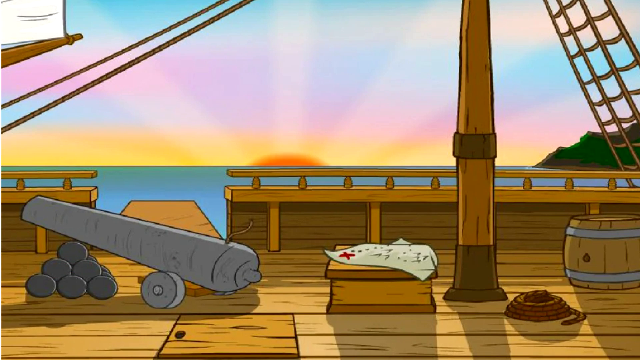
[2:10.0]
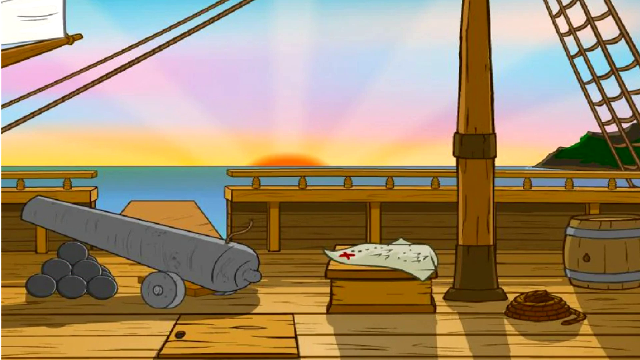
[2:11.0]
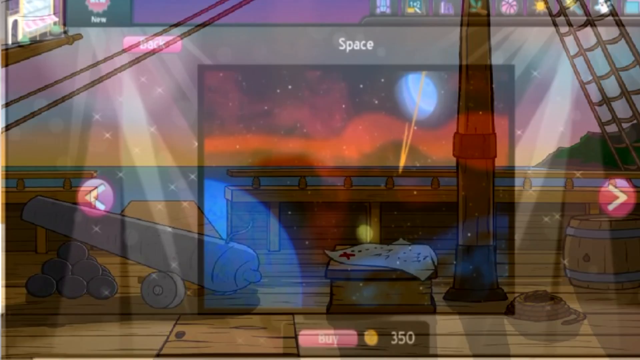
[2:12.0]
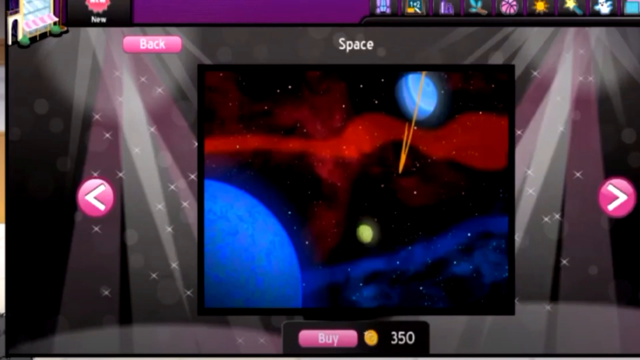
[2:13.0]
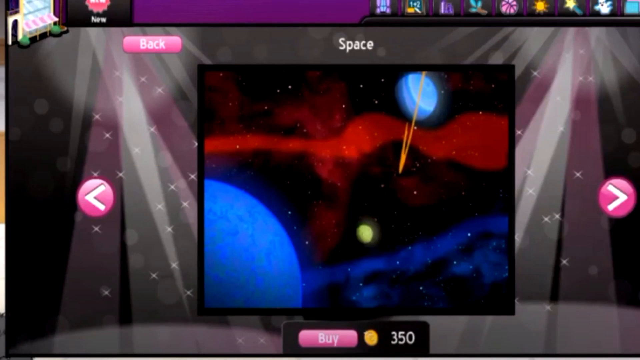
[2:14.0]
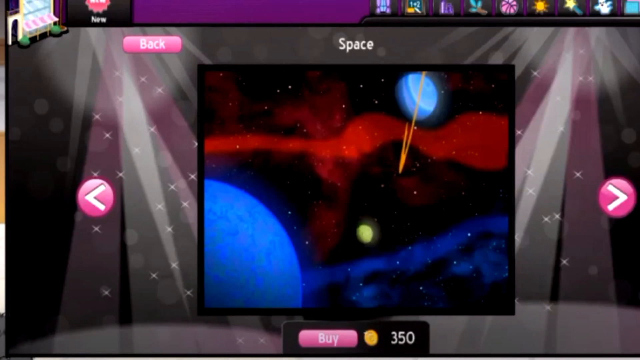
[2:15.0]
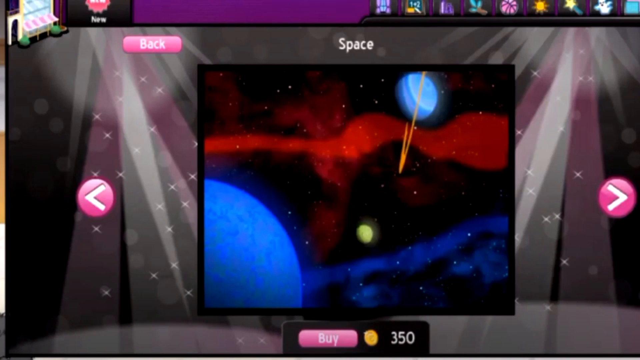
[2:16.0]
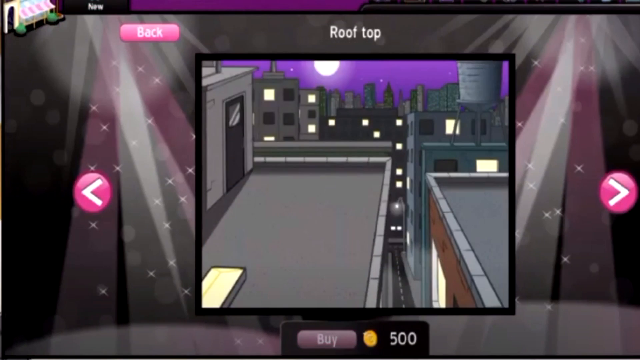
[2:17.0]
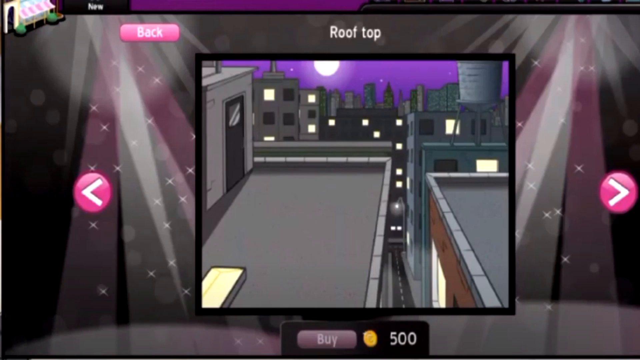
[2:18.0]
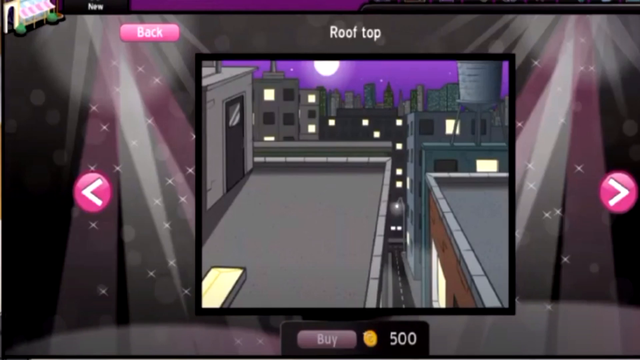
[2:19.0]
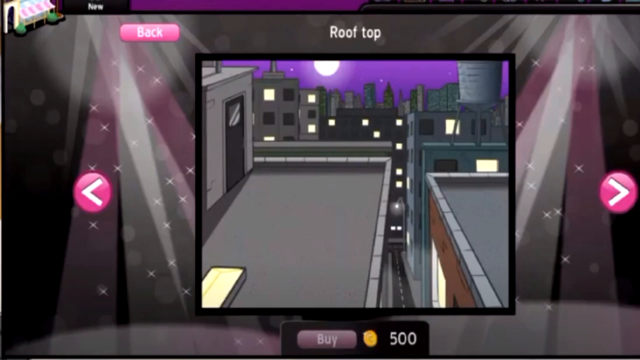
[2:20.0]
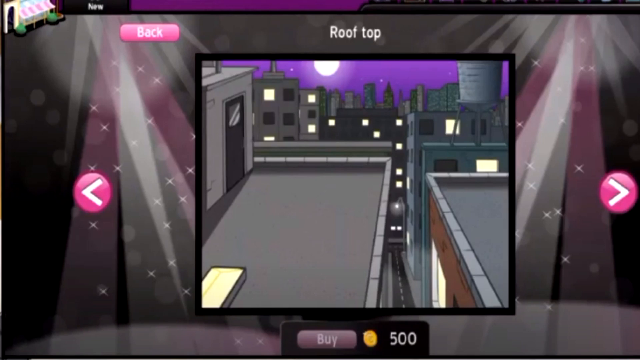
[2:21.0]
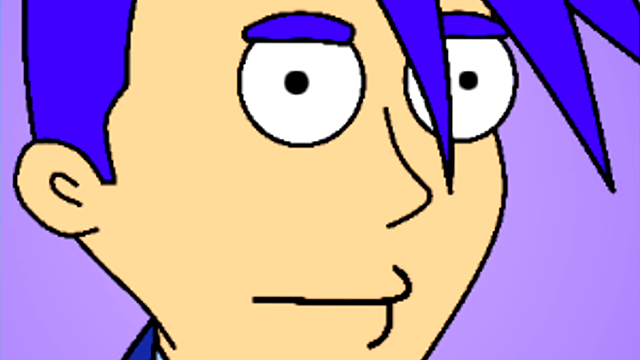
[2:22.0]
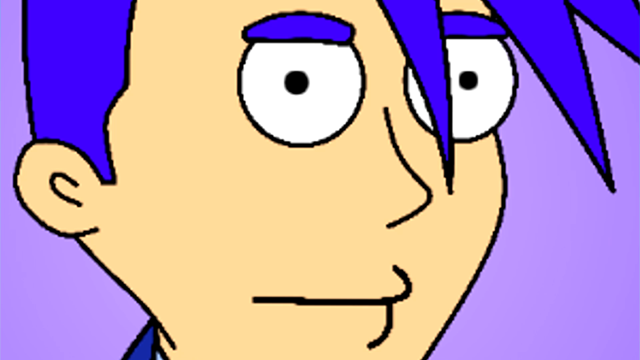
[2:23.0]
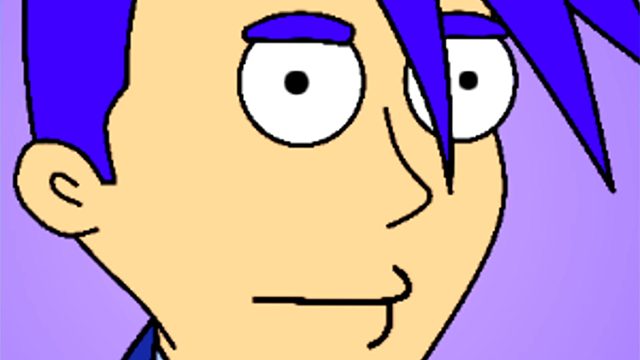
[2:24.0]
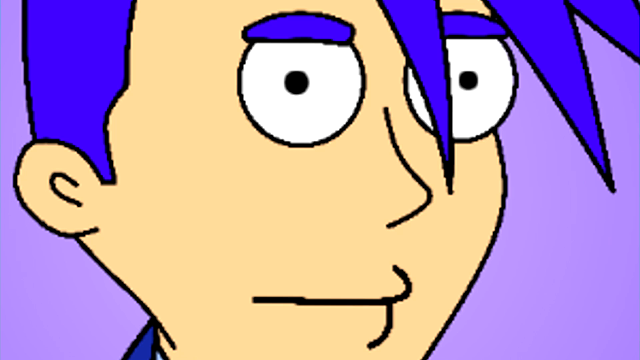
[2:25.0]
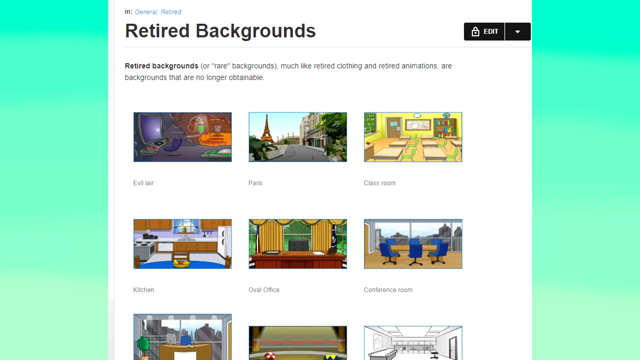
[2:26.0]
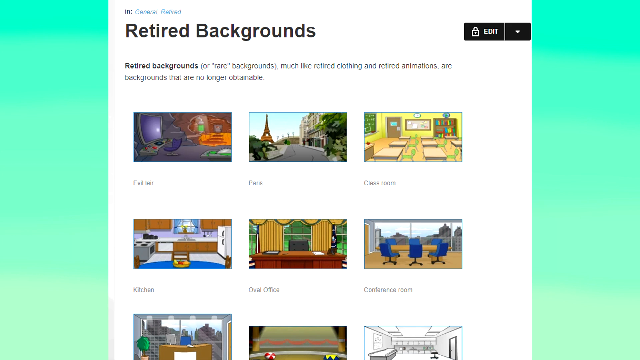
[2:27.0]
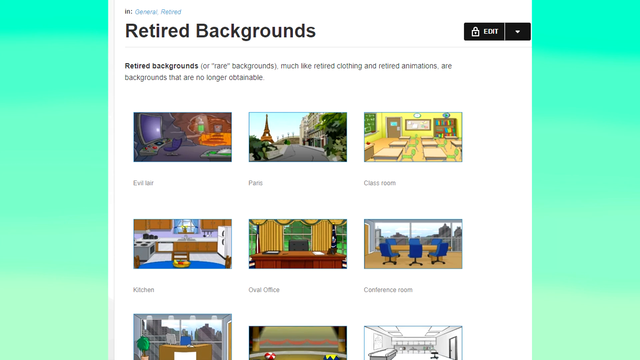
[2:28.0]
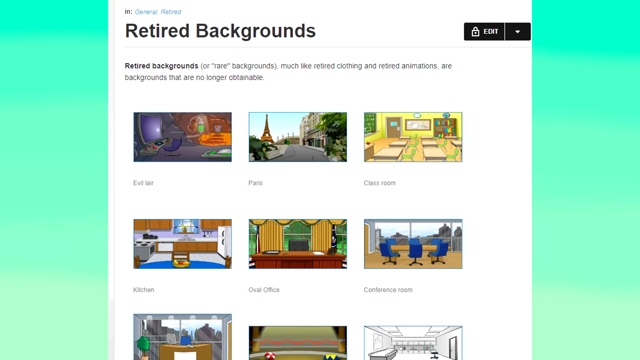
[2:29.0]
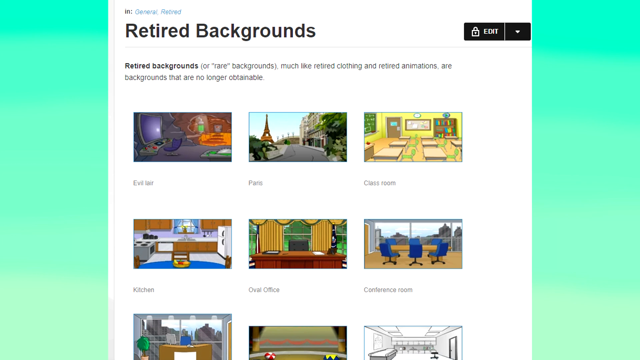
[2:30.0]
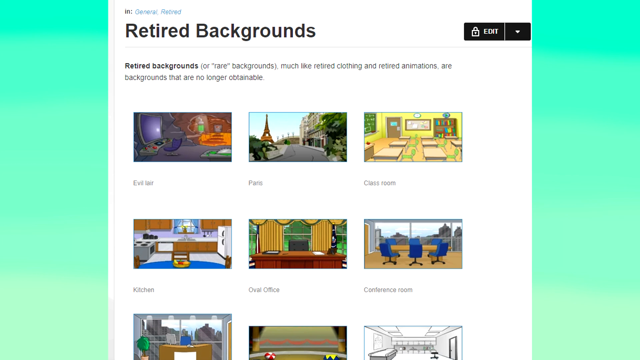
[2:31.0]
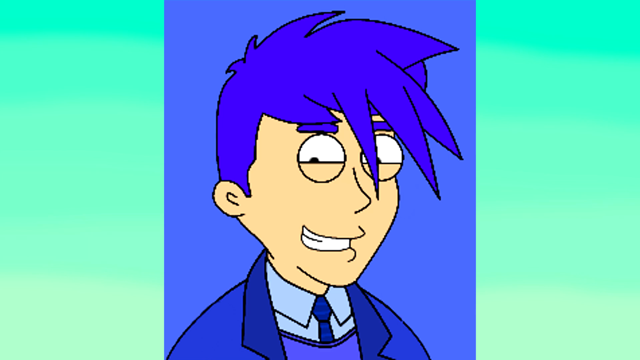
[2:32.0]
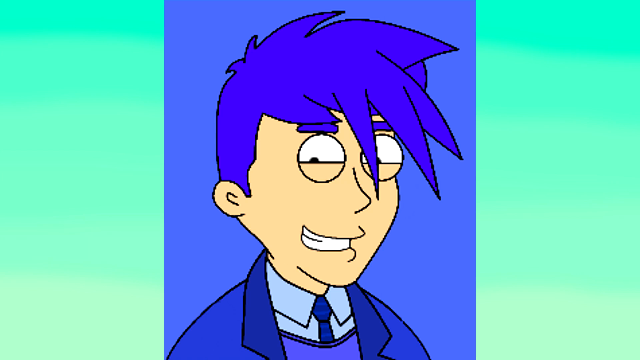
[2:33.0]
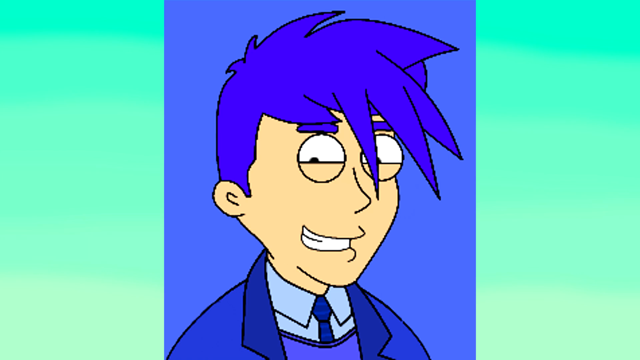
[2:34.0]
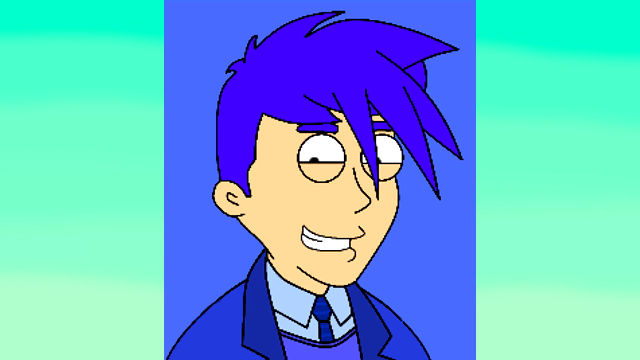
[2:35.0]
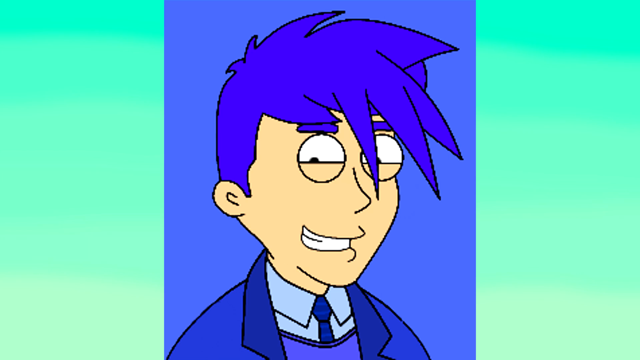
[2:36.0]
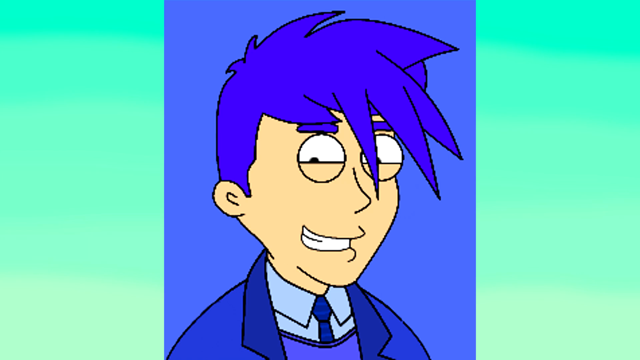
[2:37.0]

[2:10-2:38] On the pirate ship background, the sun is setting in a sky of blue, purple and yellow strips, with white beams coming out of the sun. On the ship there is a net on the right-hand side, a big mast and a barrel. In the middle is a box with a treasure map marked with a red X. A cannon is balanced on a triangular heap of cannonballs that looks six high, and a plank is just behind the cannon, walk-the-plank style; they are made of wood. A sail is visible in the top left-hand corner. Next is a space background that looks like an animated computer screen, with many icons along the top and more on the left. In the middle is a space picture: what seems to be the edge of a planet, a smaller yellow planet towards the bottom, and a slightly bigger planet above that with an orange ring, against a black sky with reds and blues. The word "space" is written at the top in white, and at the top left is a pink button that says "back" in pink. On either side of the picture is an arrow, one pointing left and one pointing right, white arrows in pink circles, suggesting you could scroll through pictures. Another background is set out in exactly the same way, with the back button and arrows, but this one says "rooftop". It shows two American-style building rooftops, like those people jump across in movies, with a door on the left leading out onto the terrace; nobody is there. The video then cuts to a background showing apparently a cartoon character with two big white eyes, peachy yellow skin, a line for the nose, a line for the mouth, and bright blue, big spiky hair and blue eyebrows, against a purple background. The video goes back to the retired backgrounds page seen before, which says "retired background or rare backgrounds much like retired clothing and retired animations are backgrounds that are no longer obtainable"; of the backgrounds listed, the evil lair has been shown, but not Paris or the conference room, while other backgrounds have been shown. It then cuts to the blue-haired face again. This time the bottom half of the eyes is the same colour as the skin and the top half is white. All of the same blue hair is now visible: short and a bit spiky, with spikes coming down over the eyes. The character wears a blue suit, a blue tie and a kind of gray shirt, and is smiling, but it is almost a grimace, not a comfortable smile.